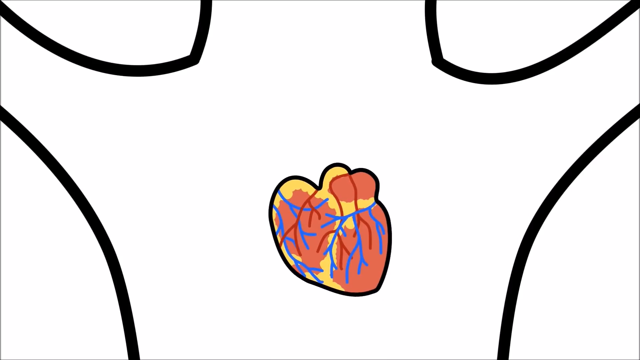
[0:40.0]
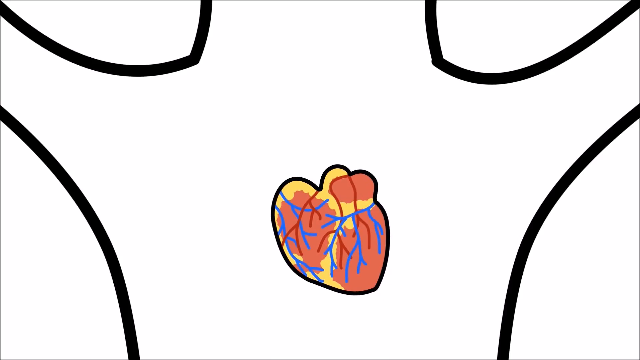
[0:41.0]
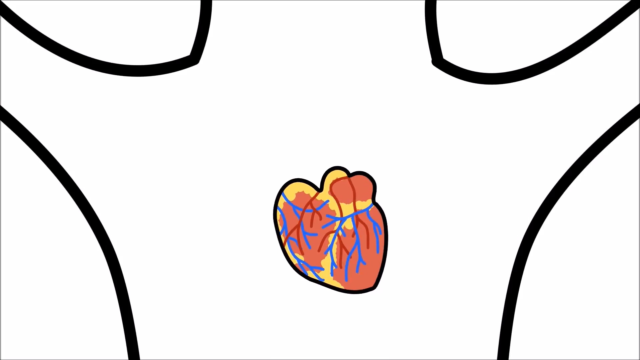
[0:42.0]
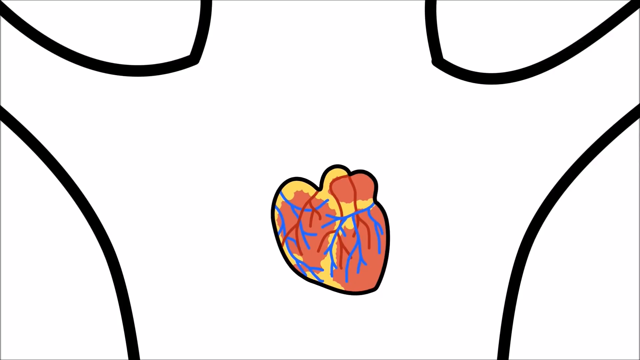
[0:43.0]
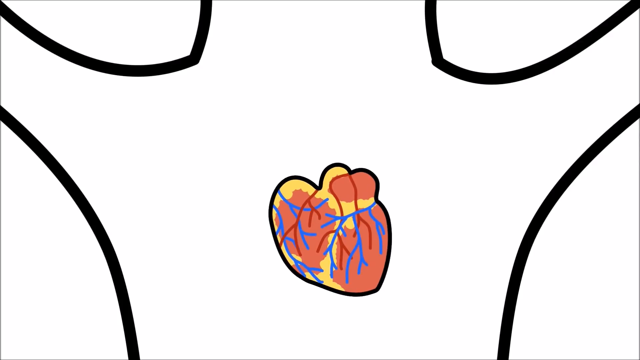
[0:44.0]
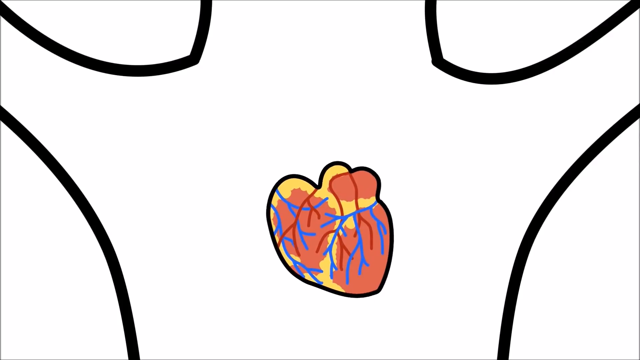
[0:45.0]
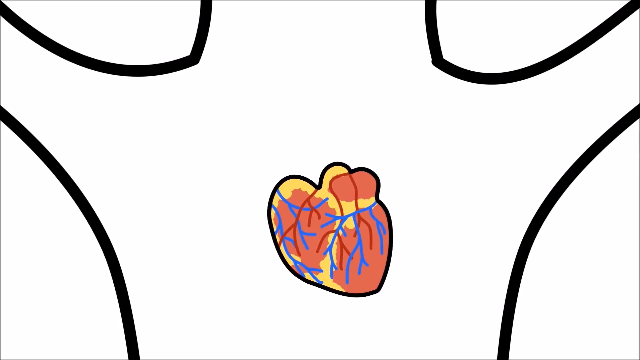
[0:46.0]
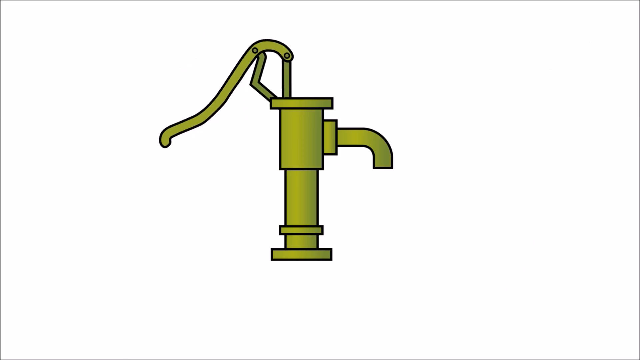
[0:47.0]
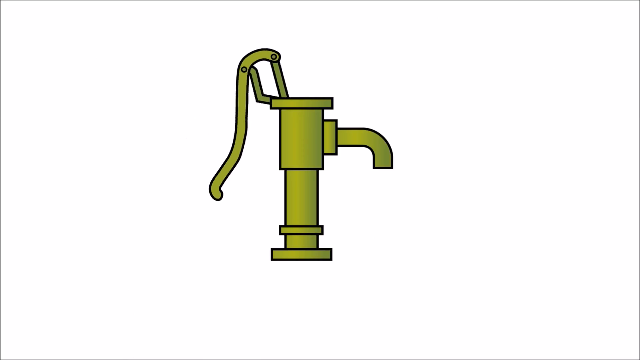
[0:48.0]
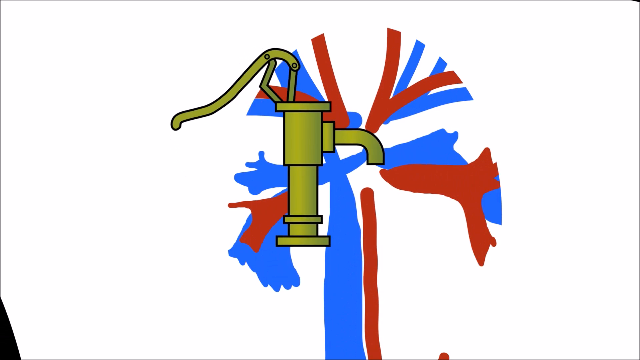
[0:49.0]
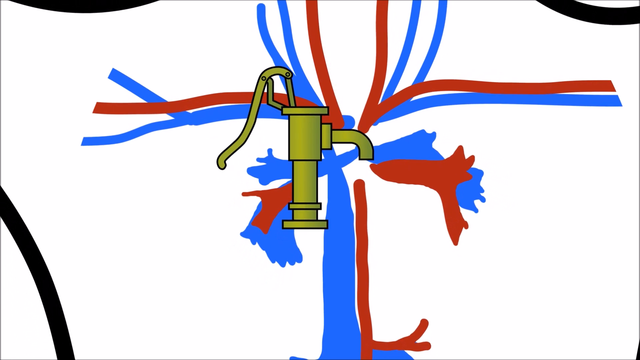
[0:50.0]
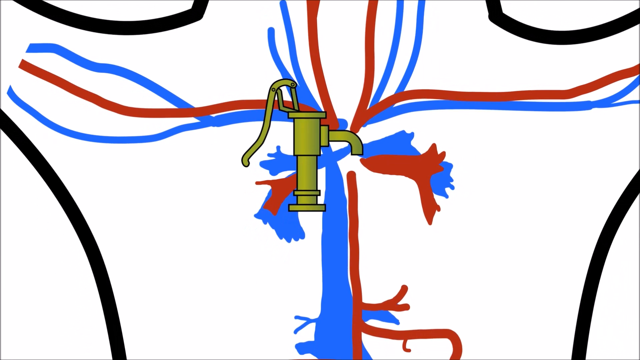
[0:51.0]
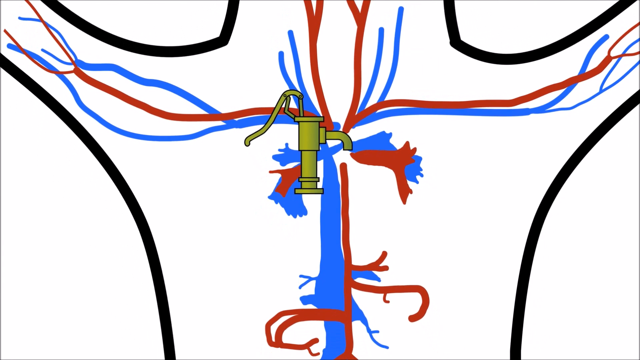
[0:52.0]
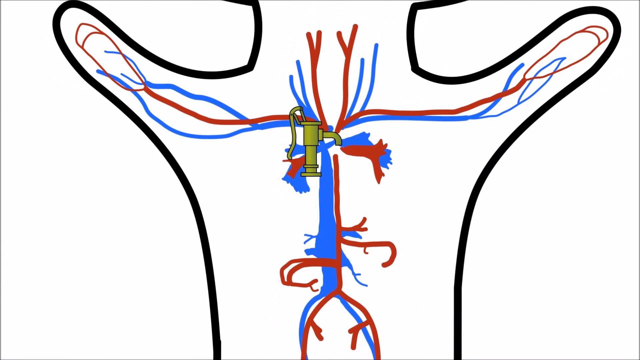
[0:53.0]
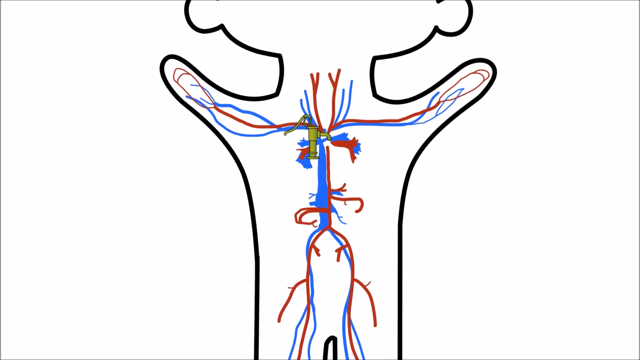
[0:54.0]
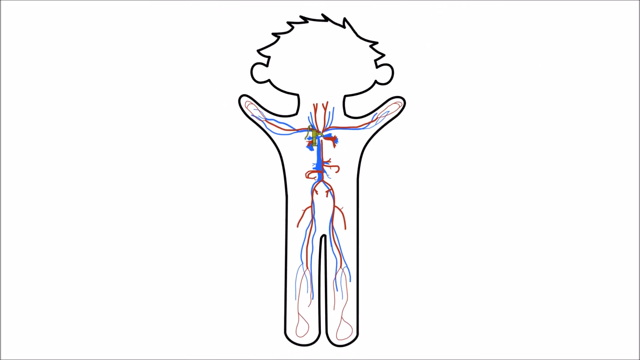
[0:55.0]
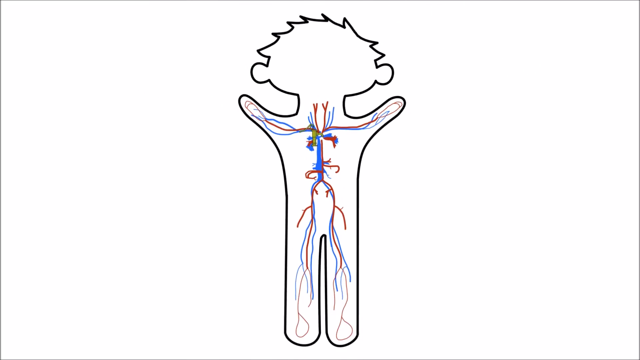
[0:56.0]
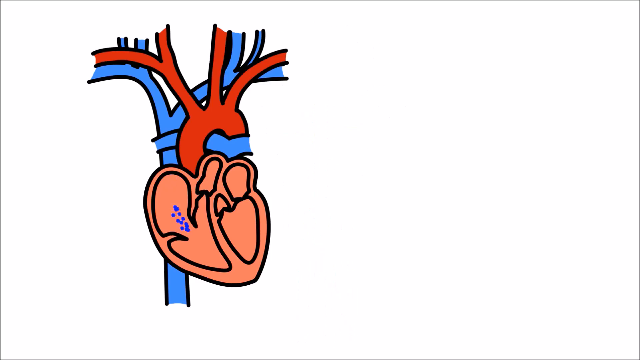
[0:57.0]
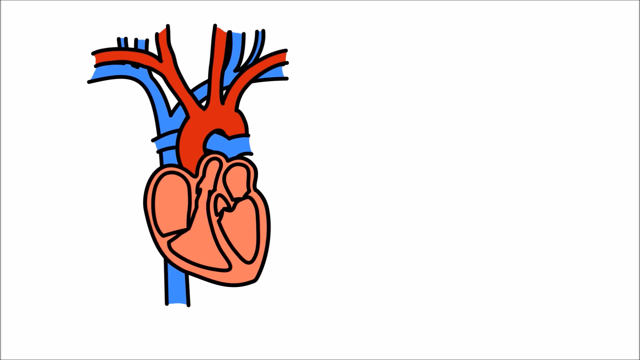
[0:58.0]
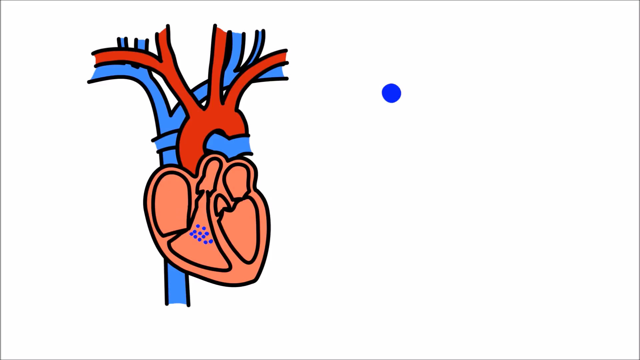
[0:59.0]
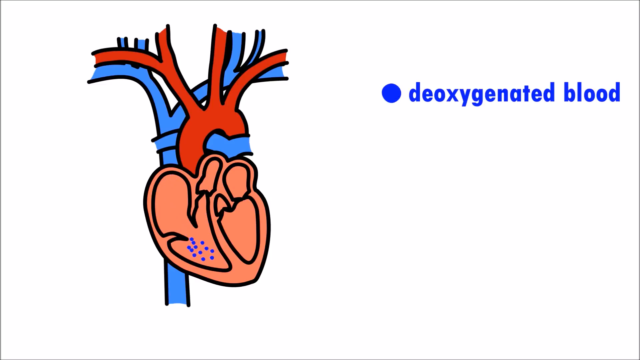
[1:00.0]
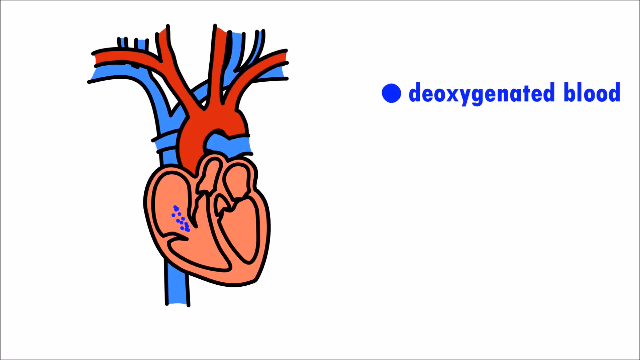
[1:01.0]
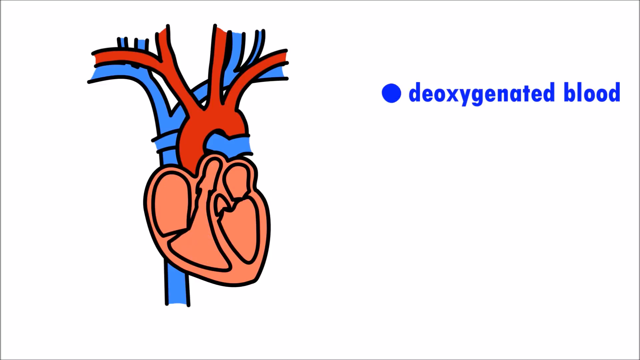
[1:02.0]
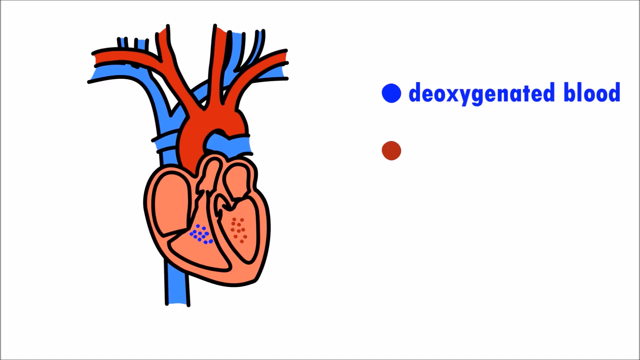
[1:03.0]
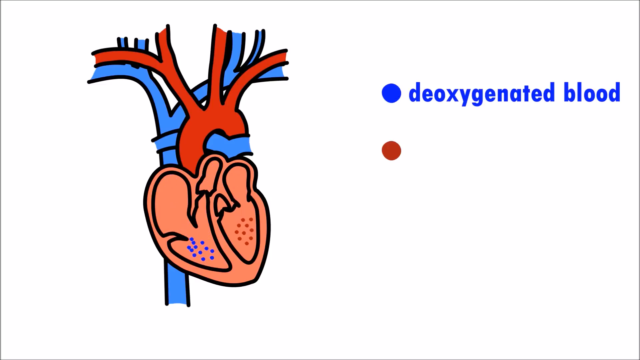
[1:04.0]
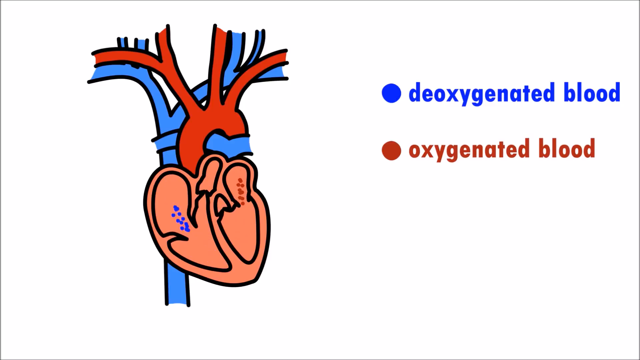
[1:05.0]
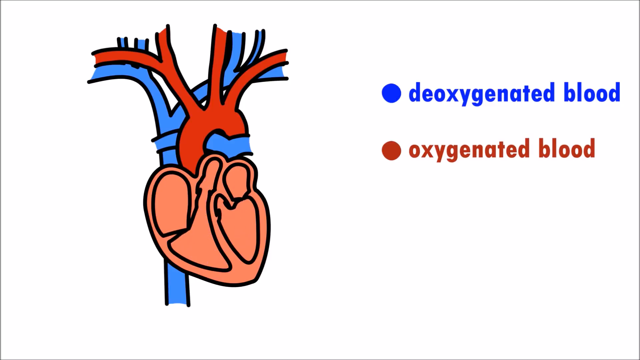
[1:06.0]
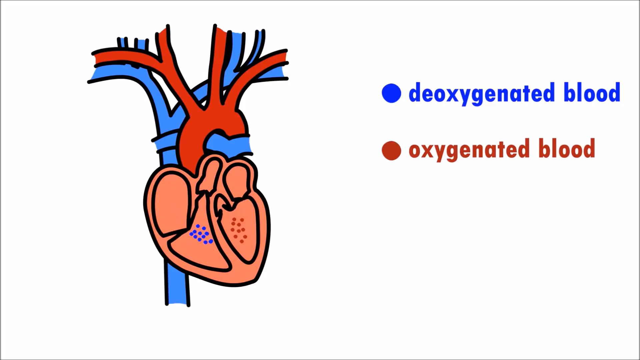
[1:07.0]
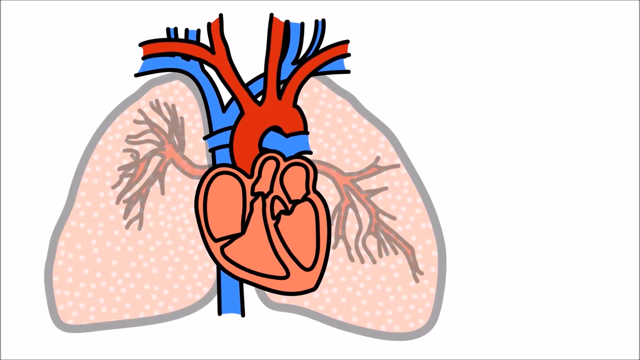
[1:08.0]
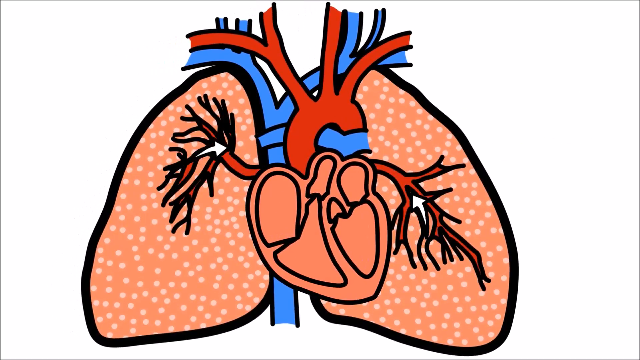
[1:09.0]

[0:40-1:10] The cartoon puppet's heart continues to beat, showing some yellow and some red in the heart along with blue and red blood vessels; it is a cartoonish image of the heart. Then a cartoon image appears of what looks like a water faucet with a lever. The lever lifts and comes down, pumping, and as it goes up and down, blood vessels spread throughout the puppet, up his arms and down to his legs, both blue and red, as the lever continues to pump. The view moves farther and farther out to show the full silhouette of the puppet with all his blood vessels. Next comes another image of the heart pumping blood in and out, with the text "deoxygenated blood" next to a blue dot. A labeled red dot is also shown, and the heart pumps both red and blue dots, which are circulated to the lungs.